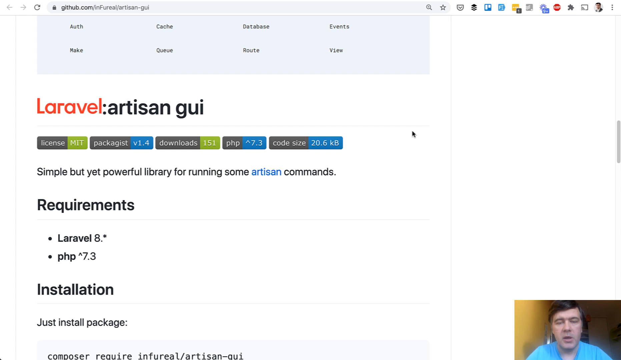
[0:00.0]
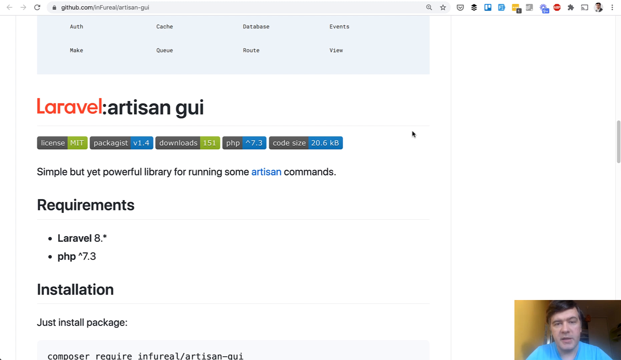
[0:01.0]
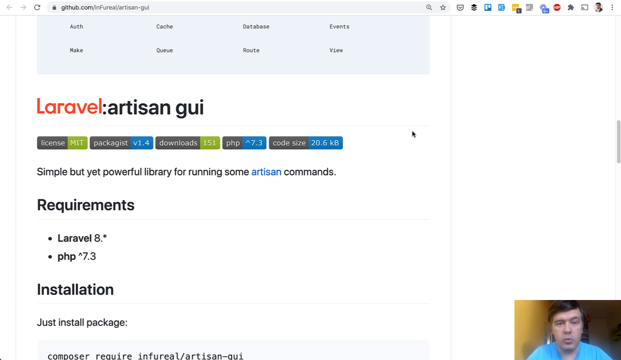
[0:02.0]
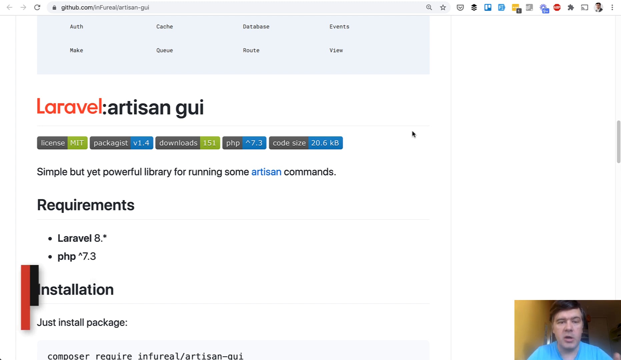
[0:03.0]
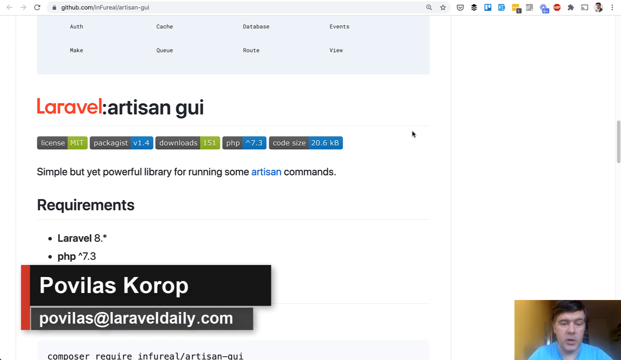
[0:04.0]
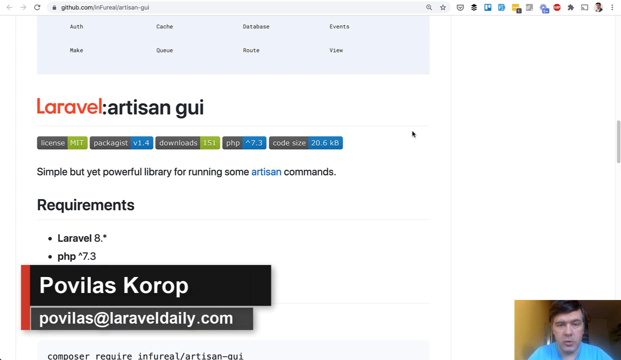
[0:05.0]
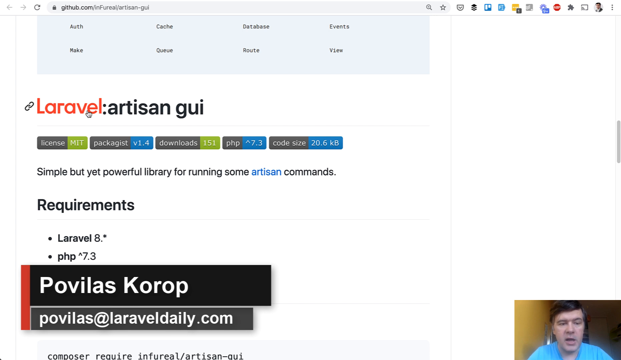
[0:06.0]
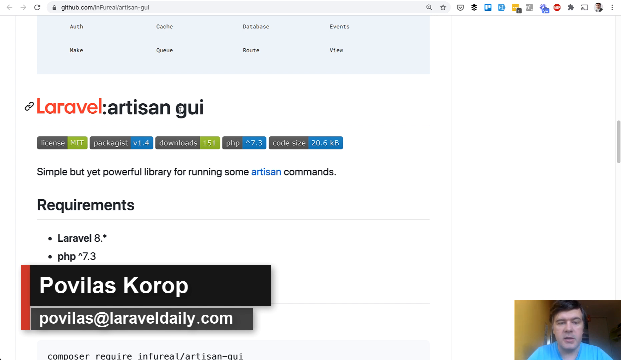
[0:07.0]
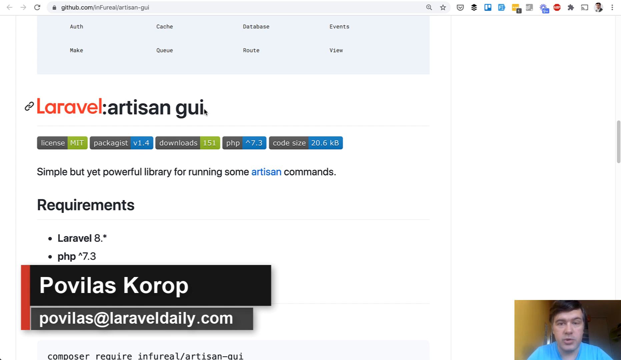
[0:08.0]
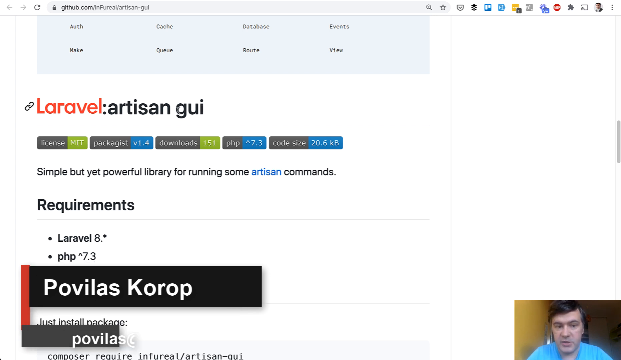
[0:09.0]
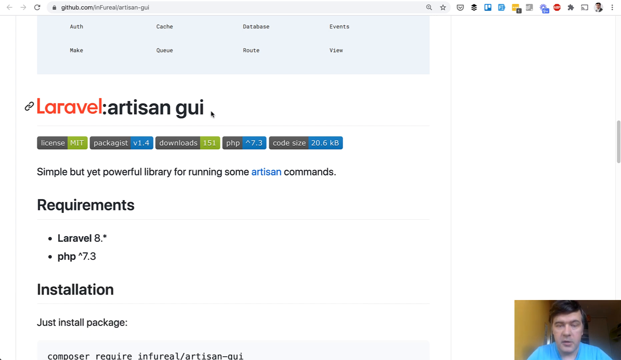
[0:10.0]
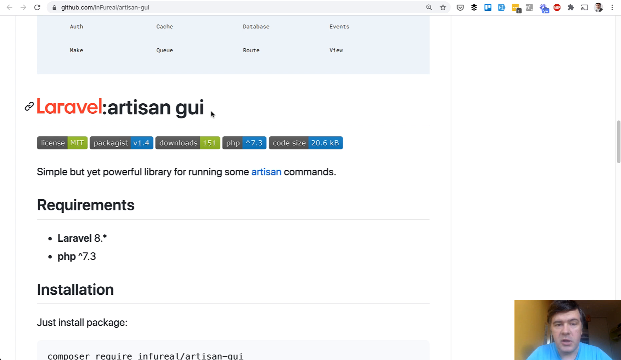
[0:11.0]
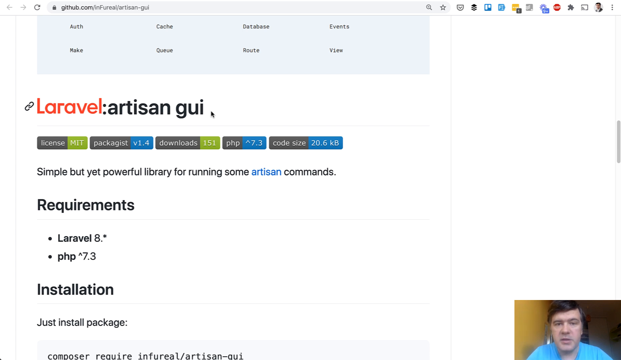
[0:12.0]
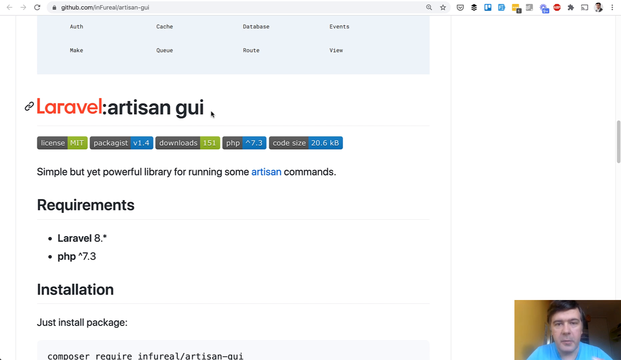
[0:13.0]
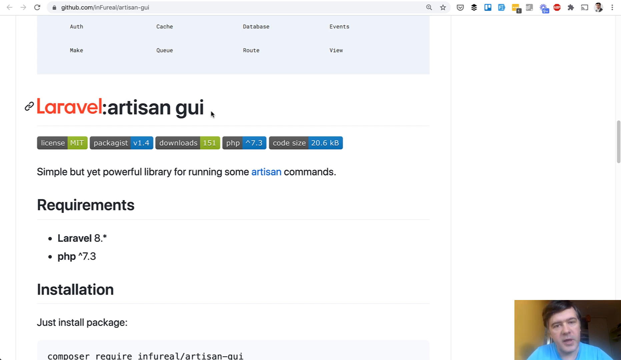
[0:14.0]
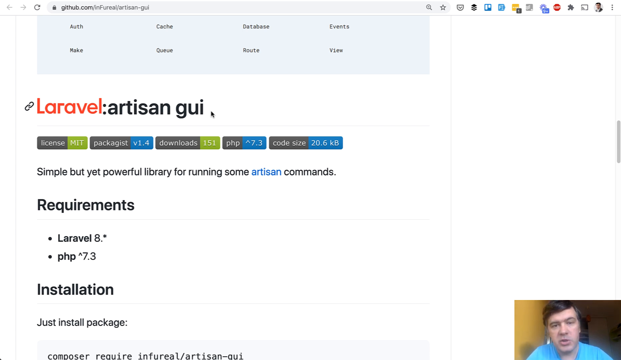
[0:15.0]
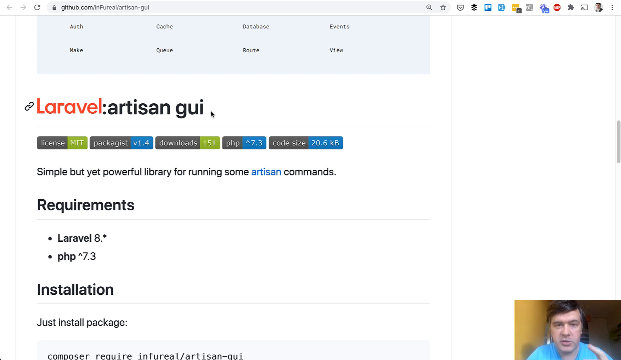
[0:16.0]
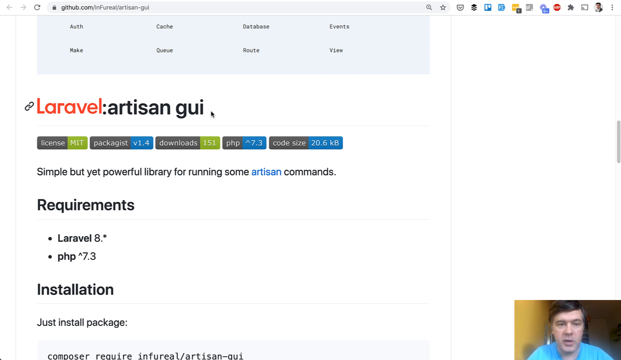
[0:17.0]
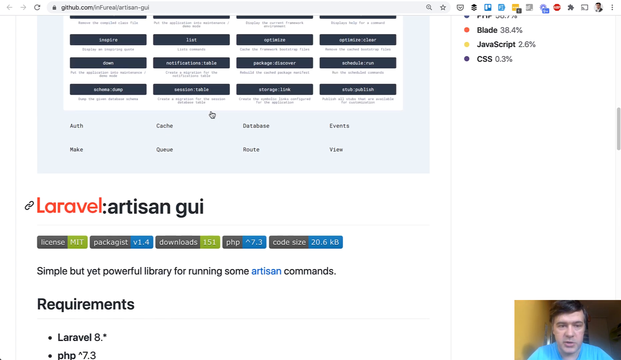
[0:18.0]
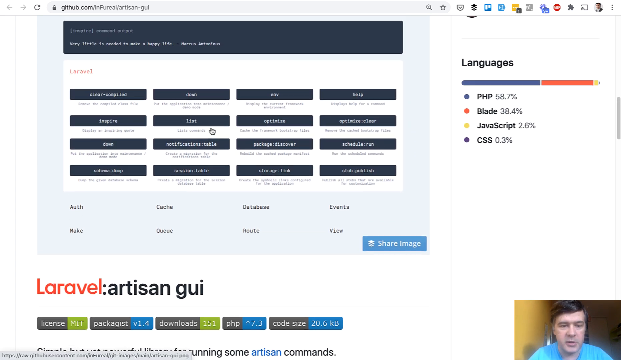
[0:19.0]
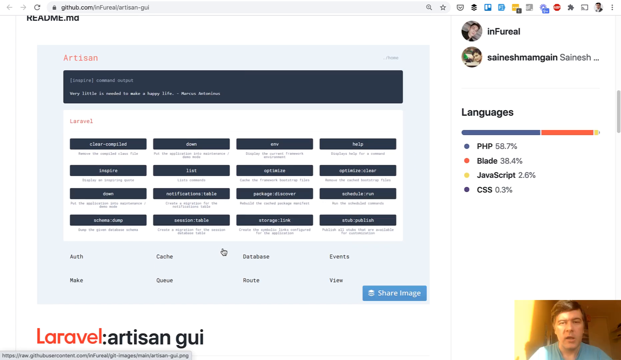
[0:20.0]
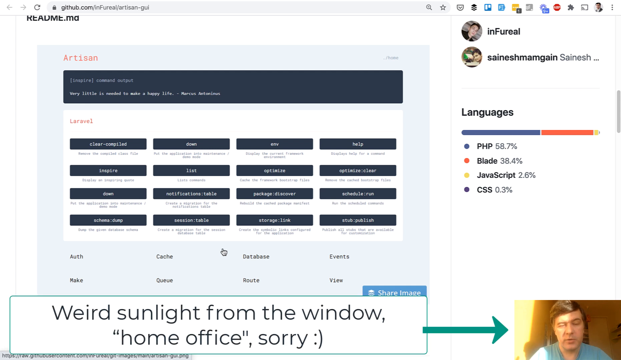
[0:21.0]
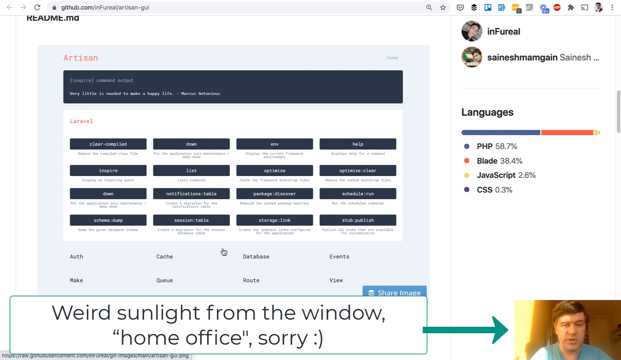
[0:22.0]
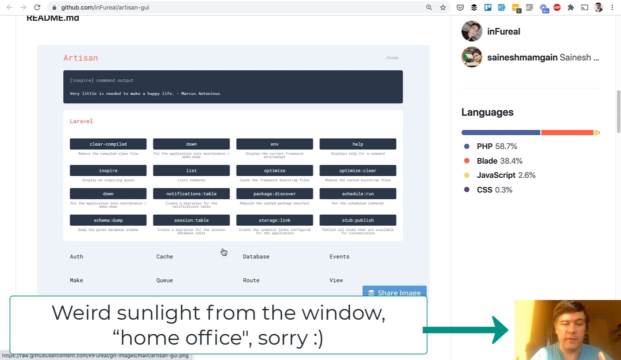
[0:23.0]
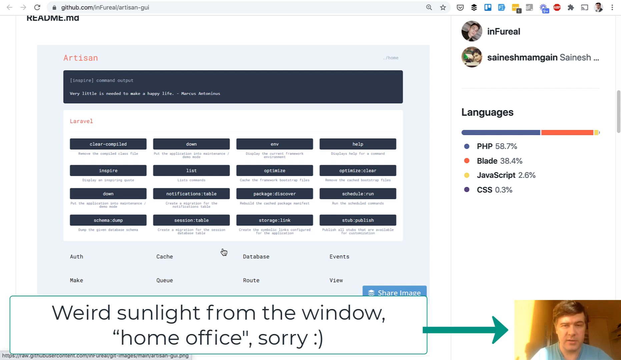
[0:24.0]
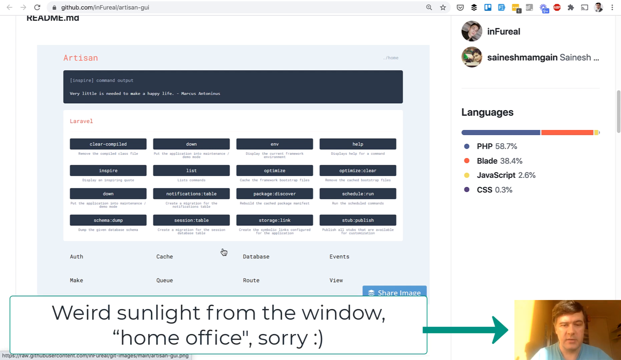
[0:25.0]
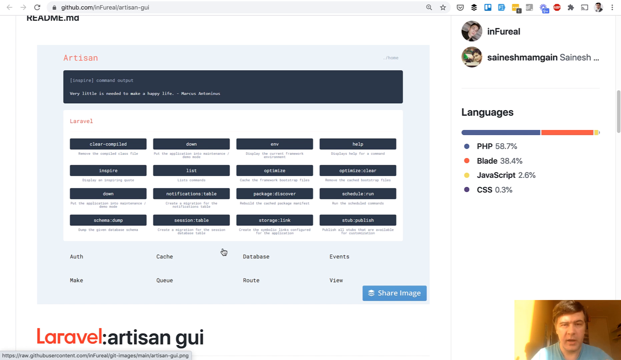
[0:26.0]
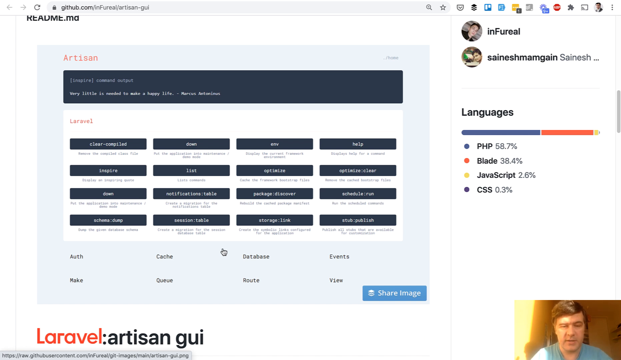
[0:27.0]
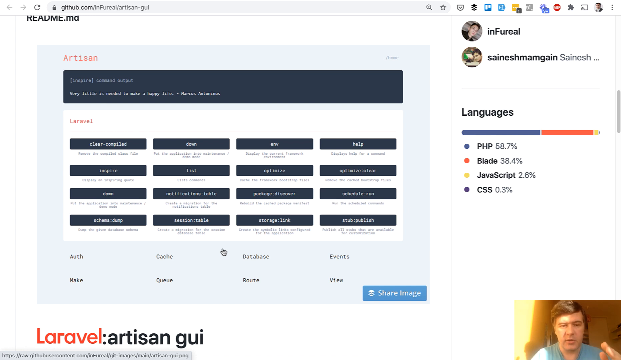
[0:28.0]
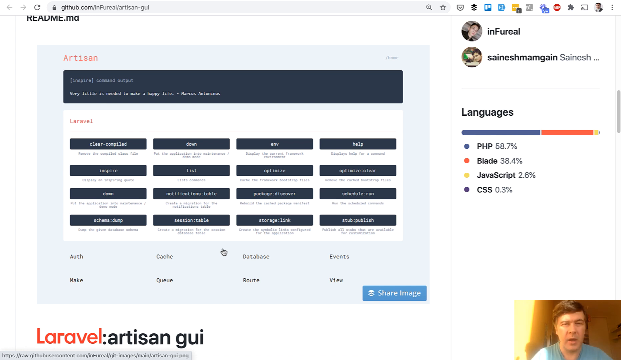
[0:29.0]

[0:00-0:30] A website is on screen, with text describing it as a "simple but yet powerful library for running some artisan commands." Menu items include "database," "events," "route" and "view," and the page shows "installation" and "just install package." A Caucasian man in a blue shirt appears at the bottom of the screen, talking. Text then appears mentioning "weird sunlight from the window, home office, sorry." A kind of glow comes from his room, seemingly that sunlight.